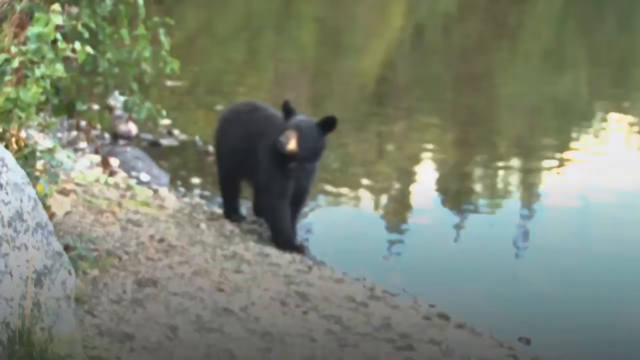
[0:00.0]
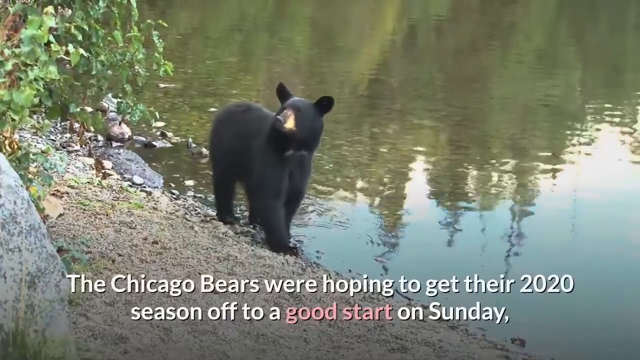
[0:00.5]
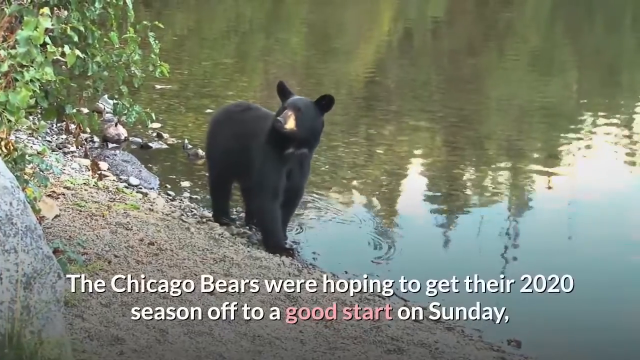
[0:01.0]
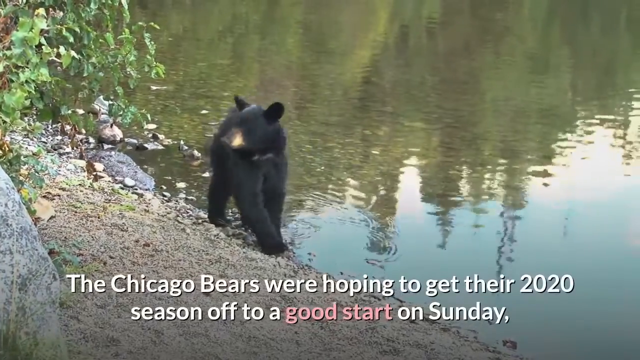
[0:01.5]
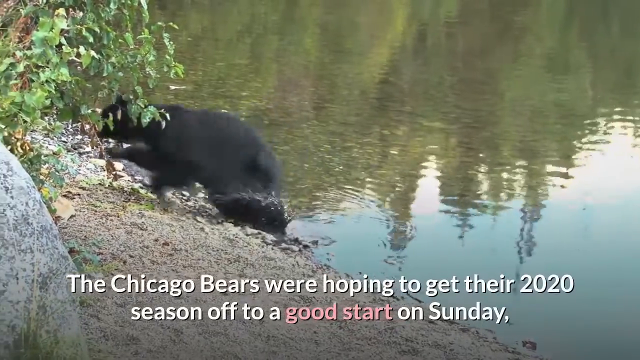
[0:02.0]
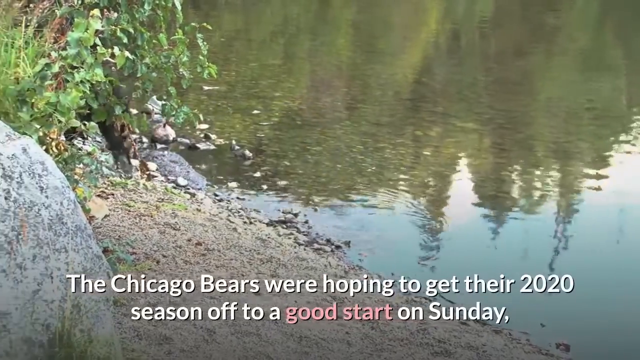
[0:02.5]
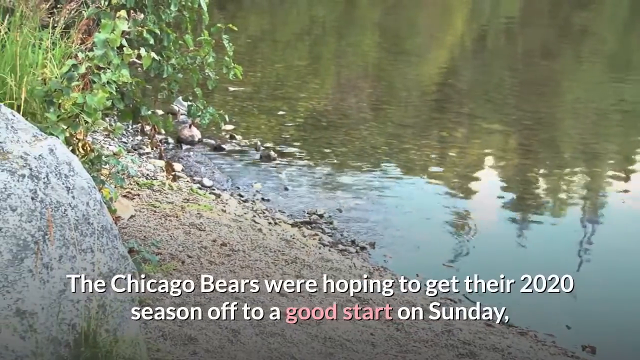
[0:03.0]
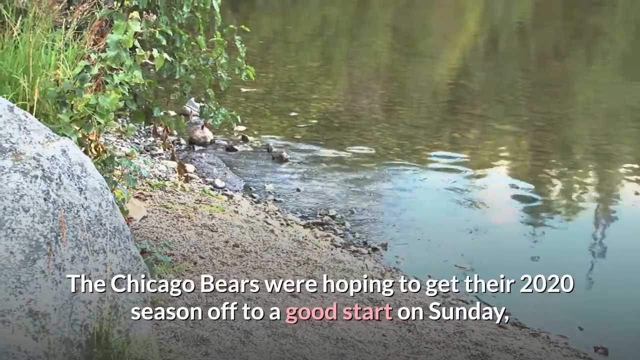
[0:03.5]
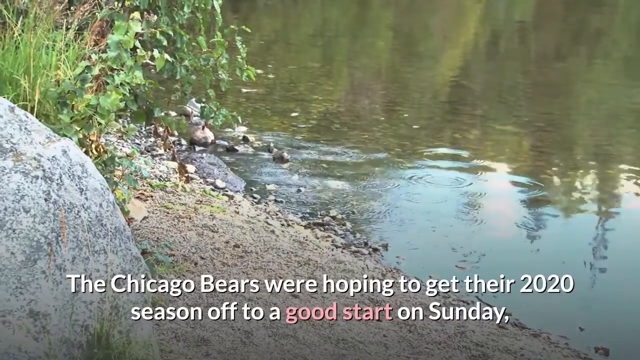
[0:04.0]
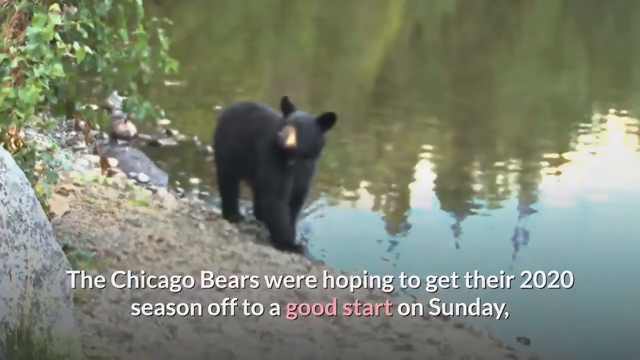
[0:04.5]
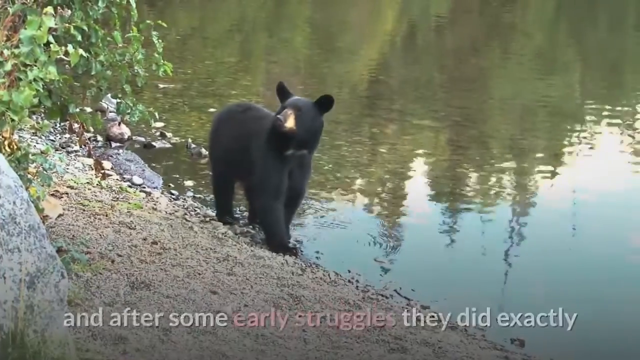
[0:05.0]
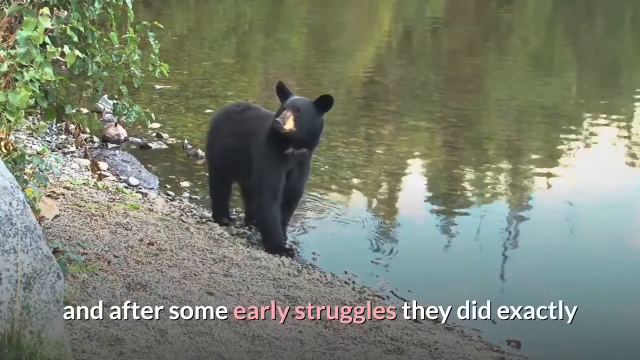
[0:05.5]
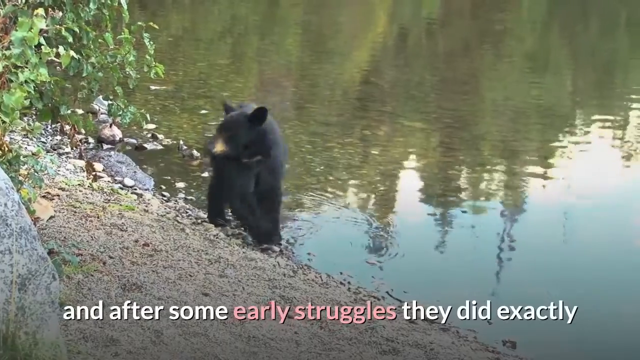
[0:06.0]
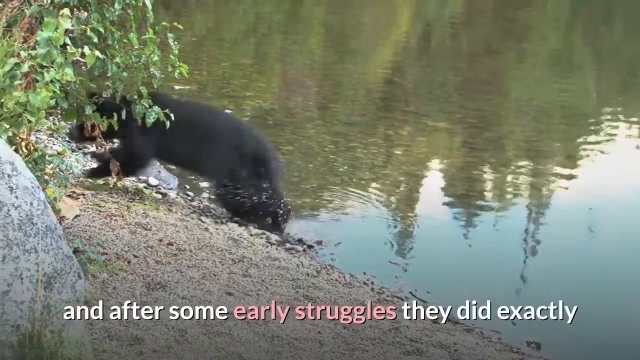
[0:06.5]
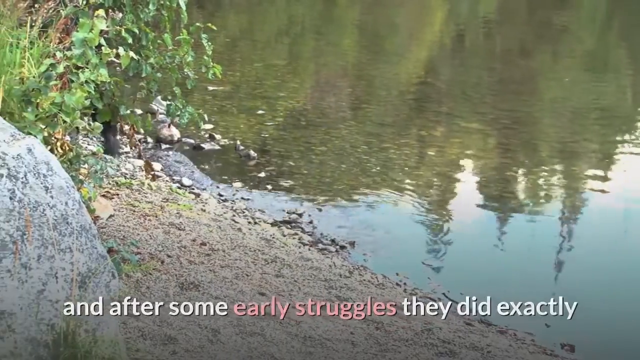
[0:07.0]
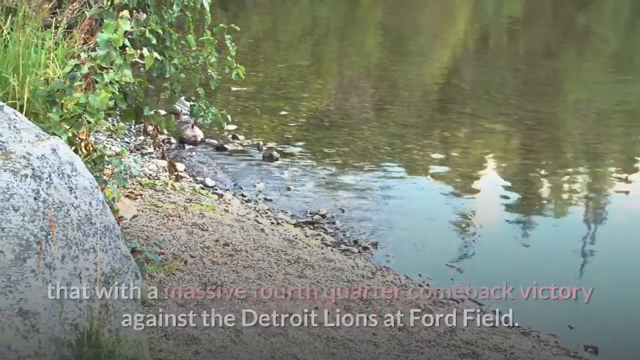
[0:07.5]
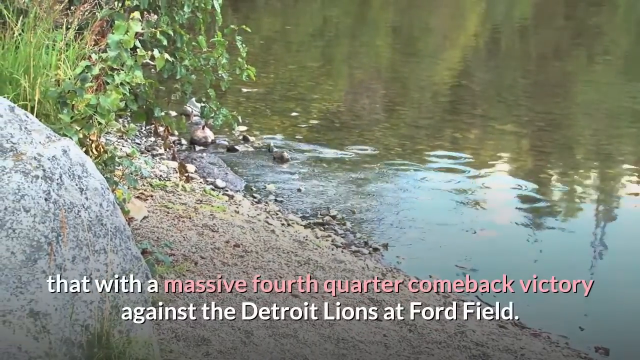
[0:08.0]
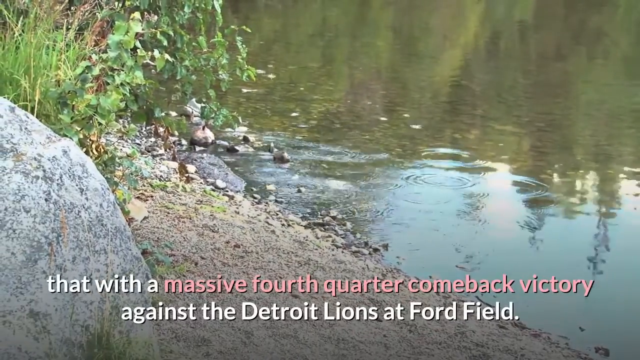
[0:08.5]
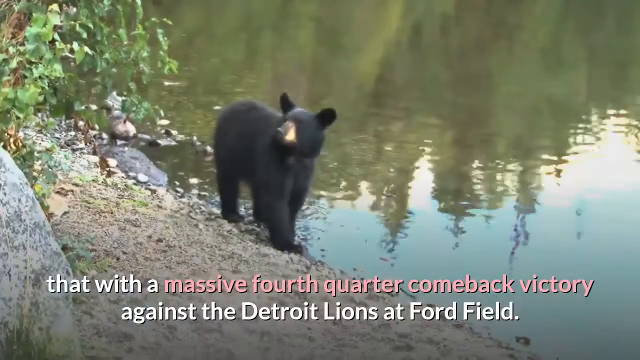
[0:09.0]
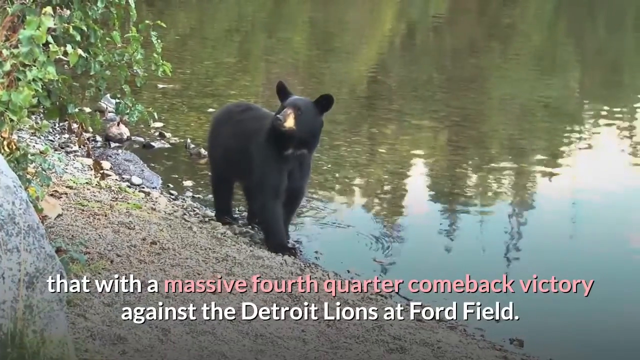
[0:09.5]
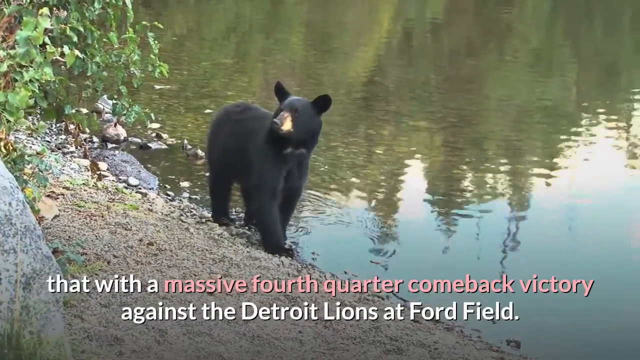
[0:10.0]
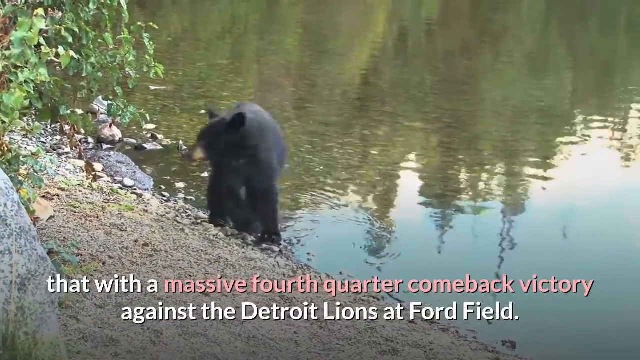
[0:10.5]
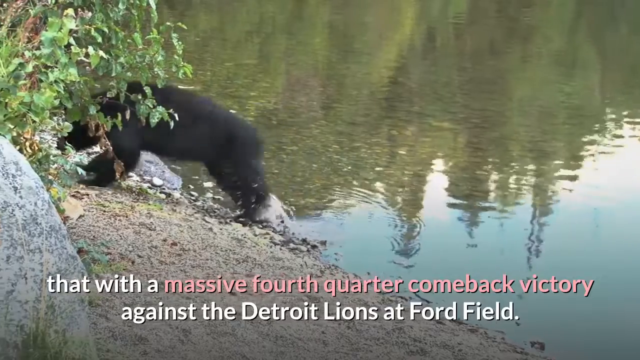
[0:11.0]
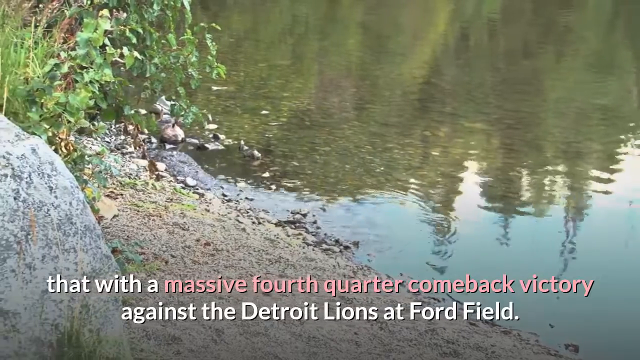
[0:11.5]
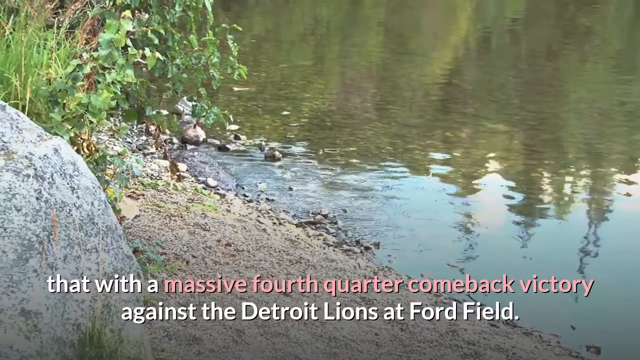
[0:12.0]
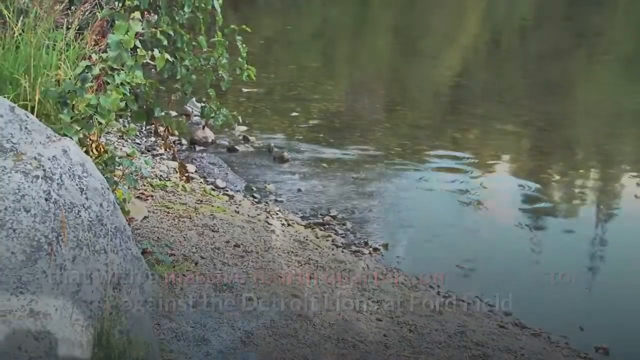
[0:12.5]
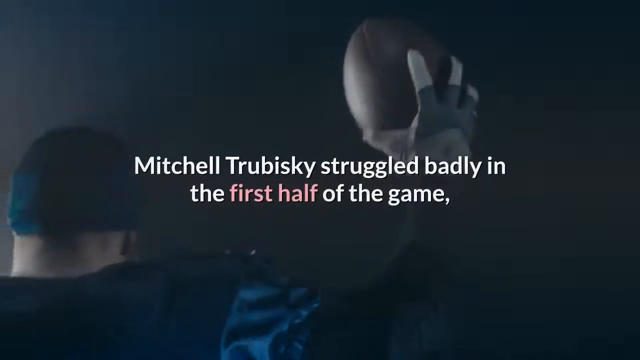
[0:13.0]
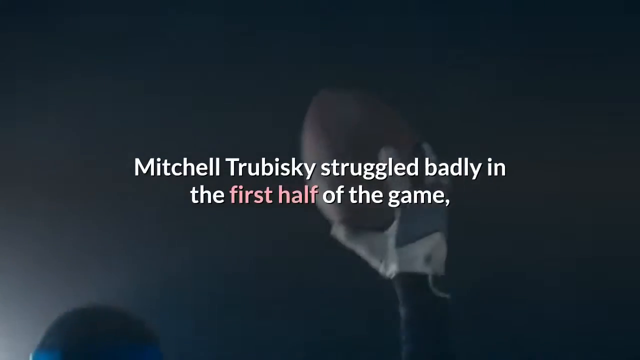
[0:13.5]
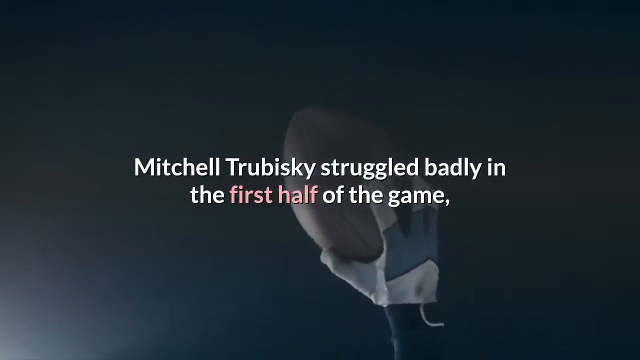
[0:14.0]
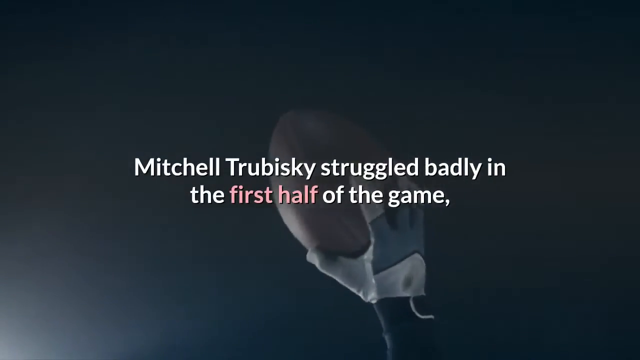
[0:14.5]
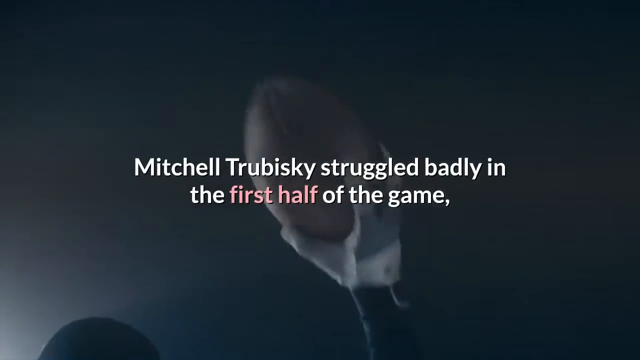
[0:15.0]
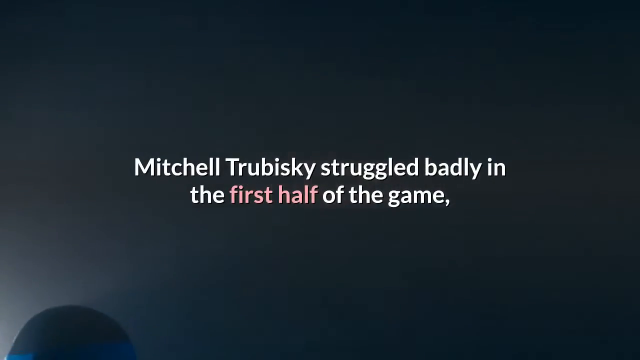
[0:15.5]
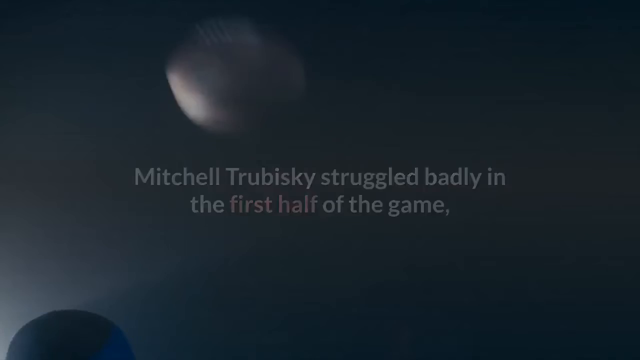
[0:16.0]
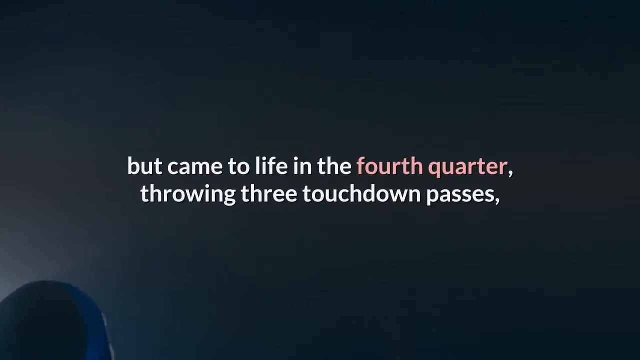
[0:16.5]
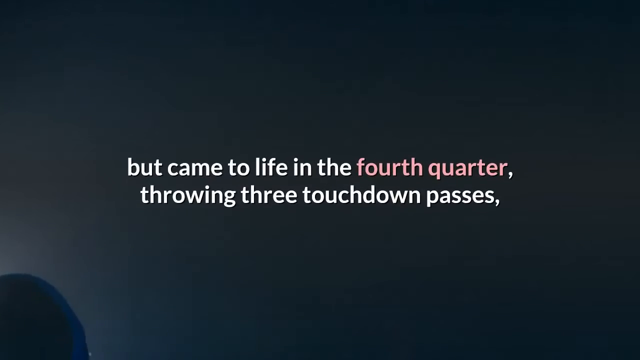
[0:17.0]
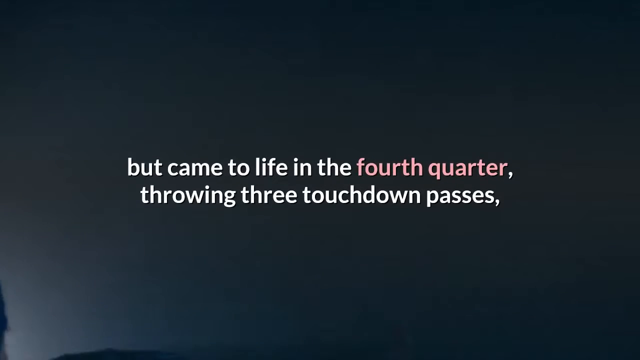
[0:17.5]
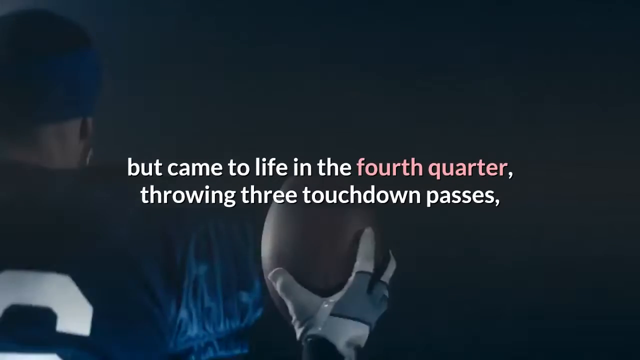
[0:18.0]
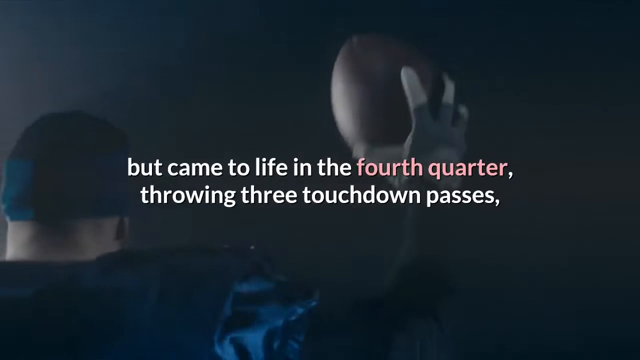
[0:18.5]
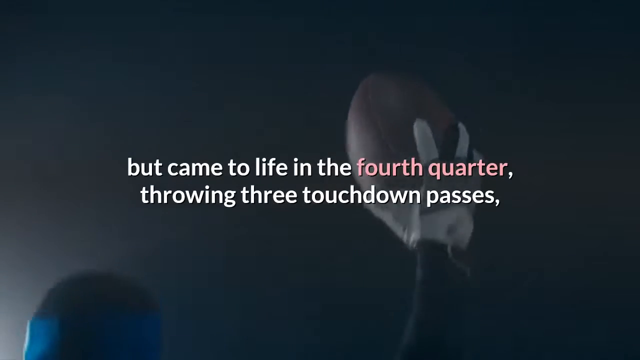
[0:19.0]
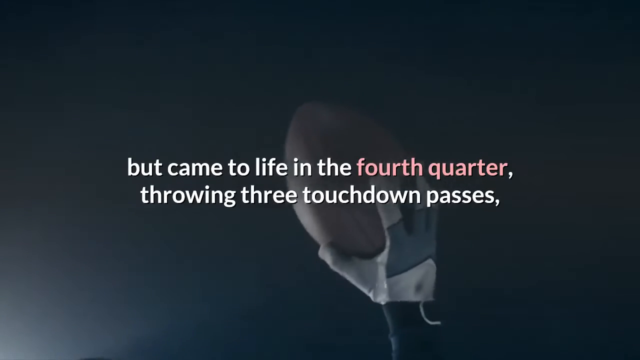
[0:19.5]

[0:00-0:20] Fresh water, from either a riverbank or a lake, meets a piece of land on the side that looks like a forest or mountain. A young black bear with black hair and a brown snout is standing at the point where the water meets the land. The bear seemingly looks to eat on the land, then seemingly spots something and runs away; this action is repeated more than three times. Text at the bottom reads "the Chicago Bears were hoping to get their 2020 season off to a good start on Sunday," followed by text saying "they did exactly that" with a "victory against the Detroit Lions." The next screen shows someone holding a football in his hand and putting it up against a dark black background with text reading "struggled badly in the first half of the game, but came to life in the fourth quarter throwing the touchdown passes."